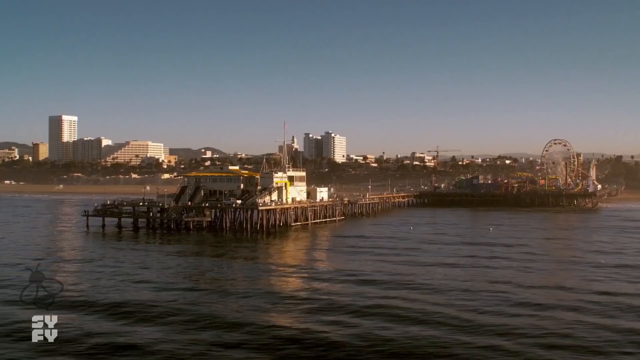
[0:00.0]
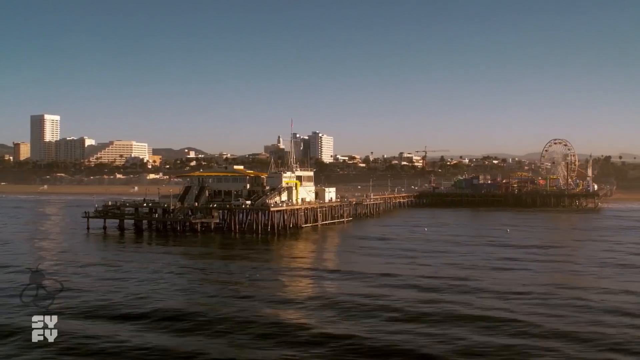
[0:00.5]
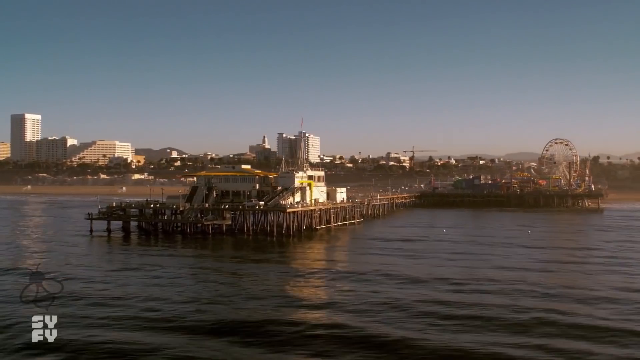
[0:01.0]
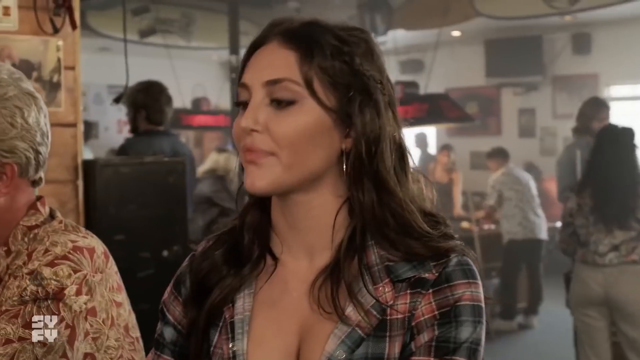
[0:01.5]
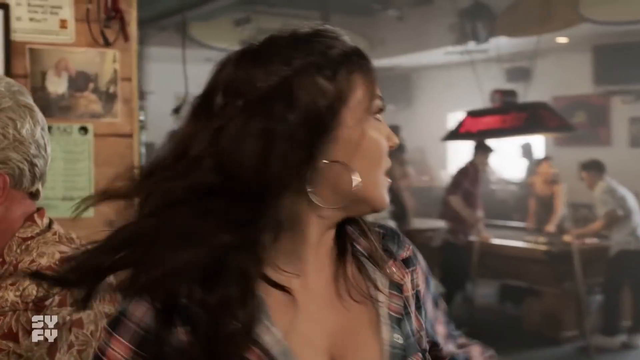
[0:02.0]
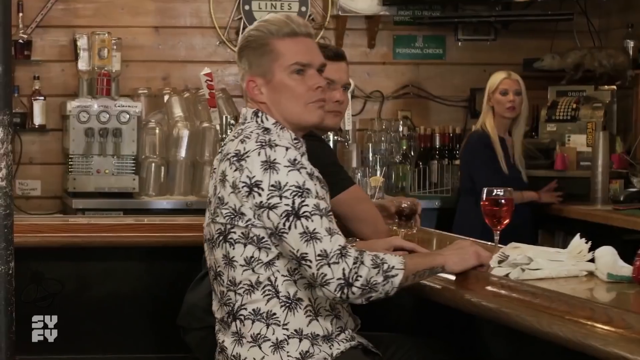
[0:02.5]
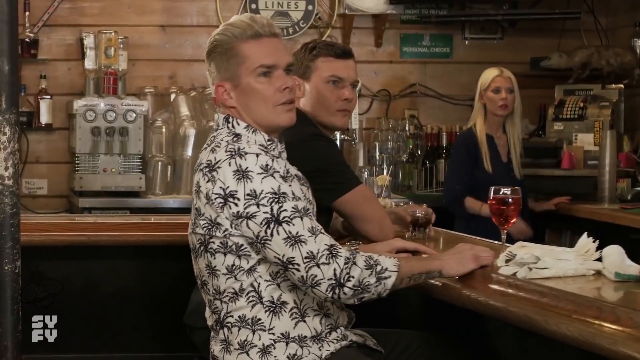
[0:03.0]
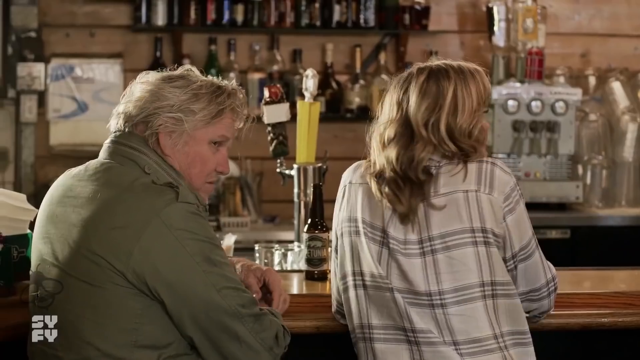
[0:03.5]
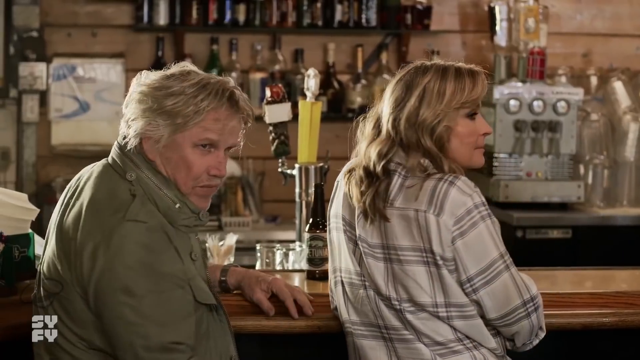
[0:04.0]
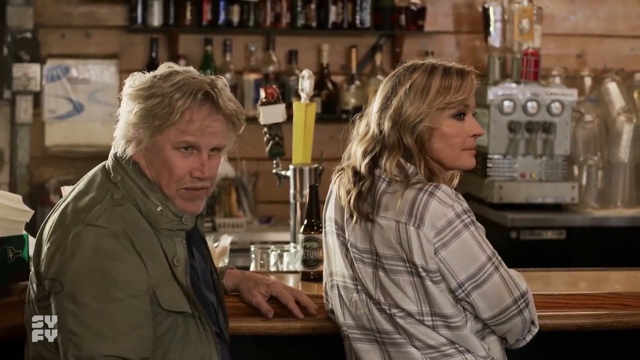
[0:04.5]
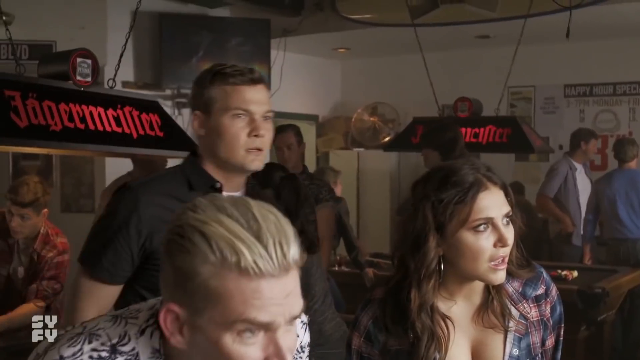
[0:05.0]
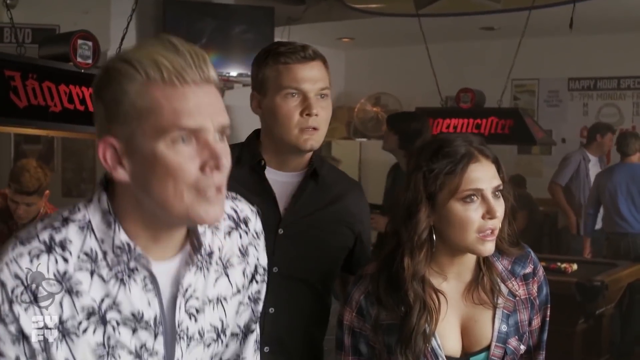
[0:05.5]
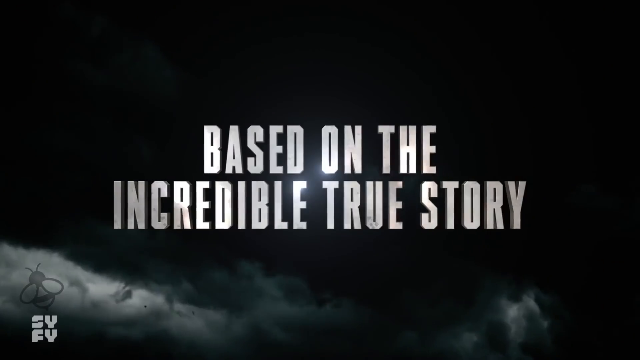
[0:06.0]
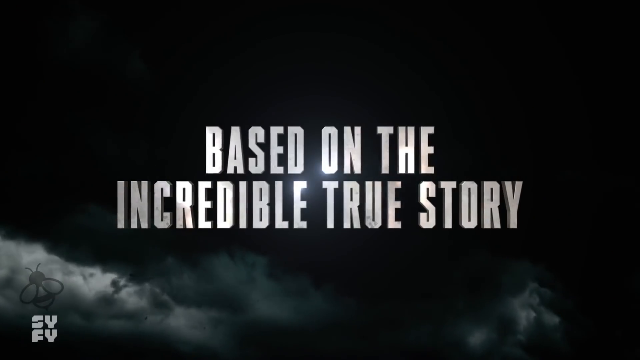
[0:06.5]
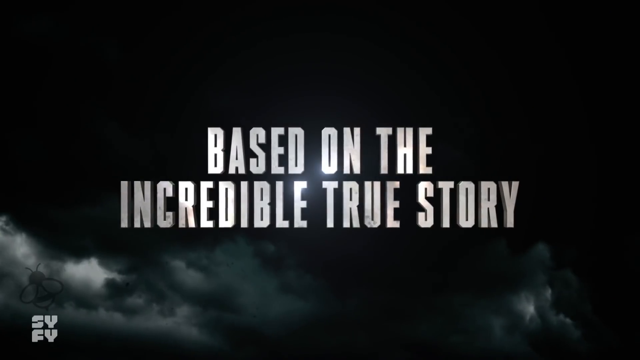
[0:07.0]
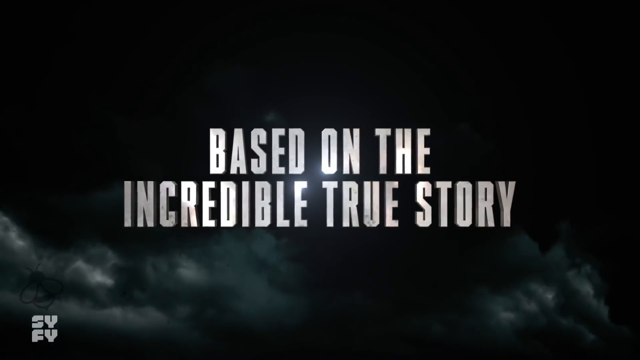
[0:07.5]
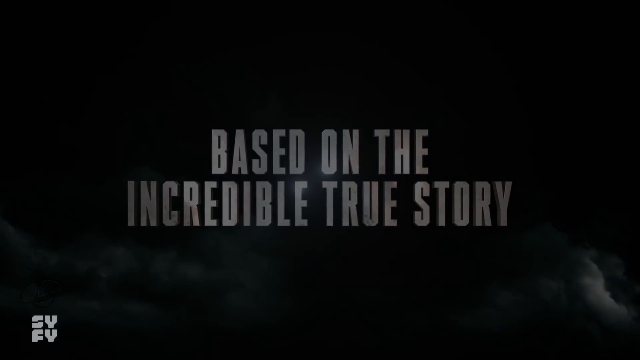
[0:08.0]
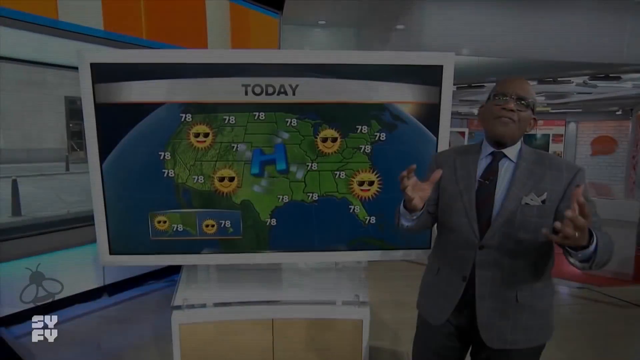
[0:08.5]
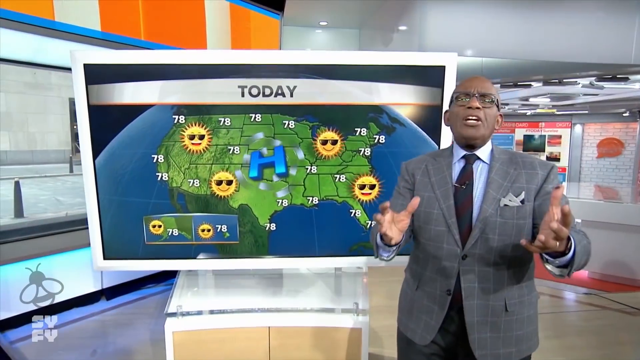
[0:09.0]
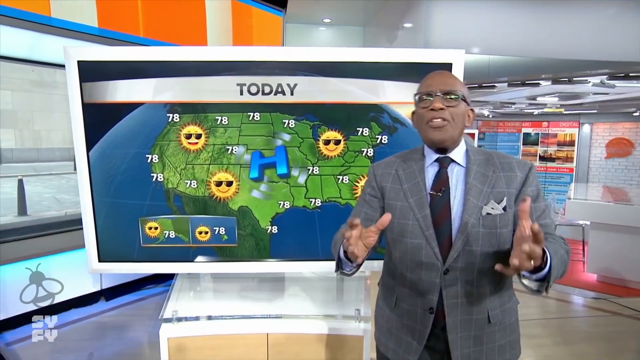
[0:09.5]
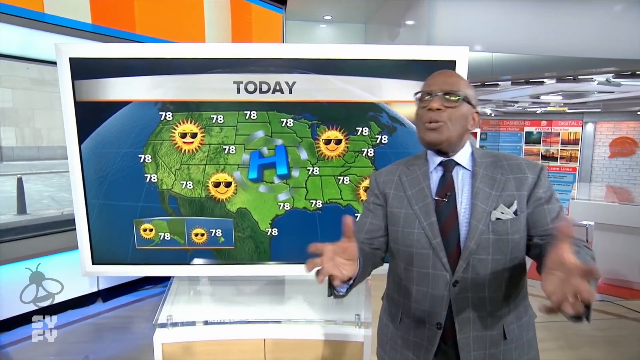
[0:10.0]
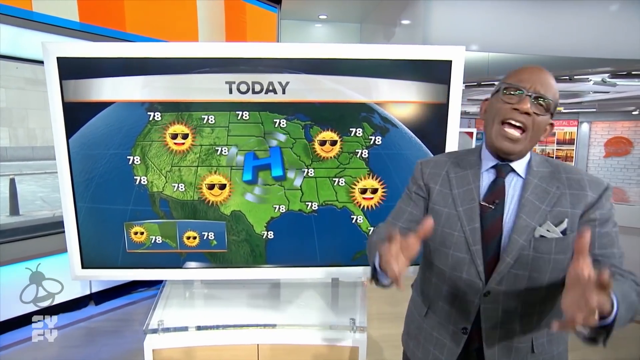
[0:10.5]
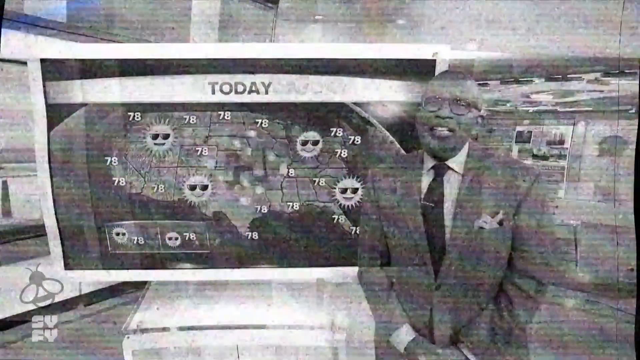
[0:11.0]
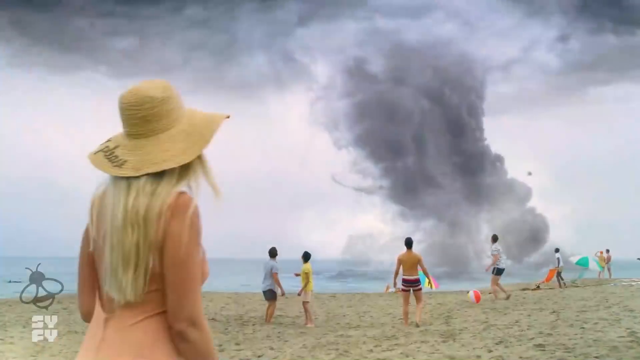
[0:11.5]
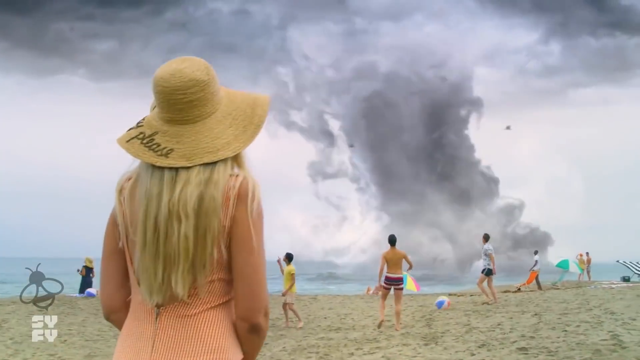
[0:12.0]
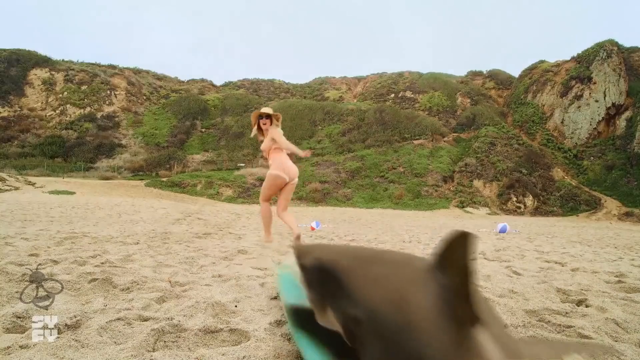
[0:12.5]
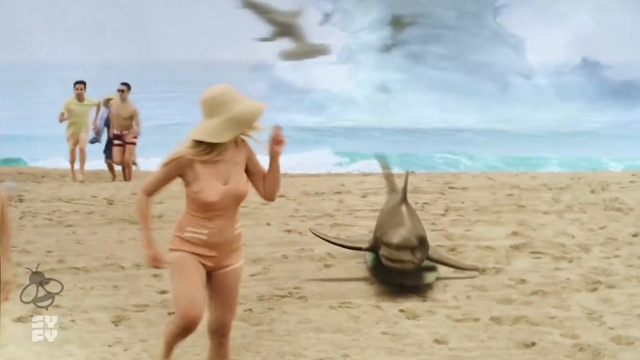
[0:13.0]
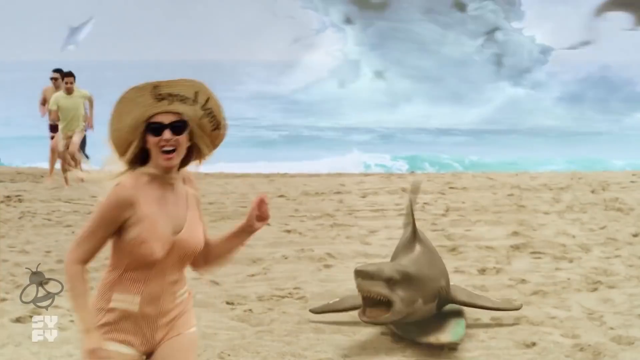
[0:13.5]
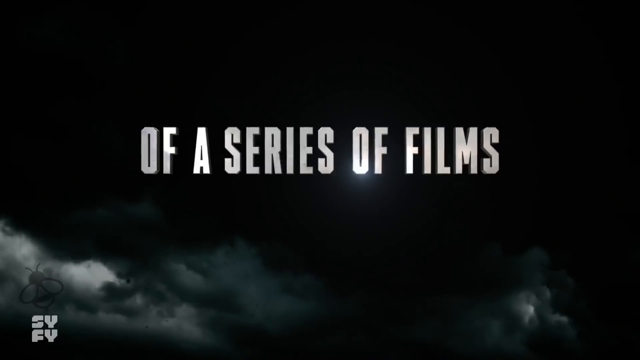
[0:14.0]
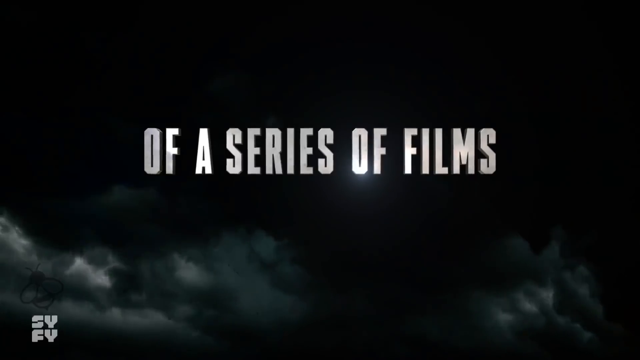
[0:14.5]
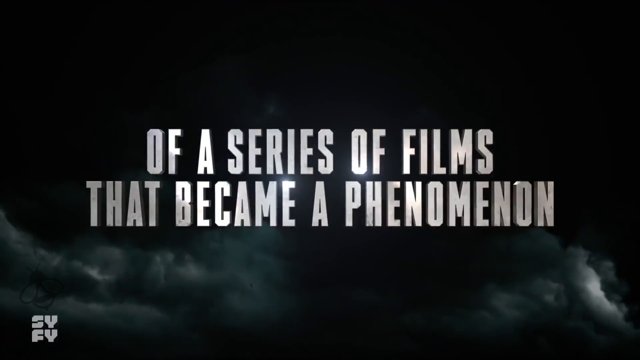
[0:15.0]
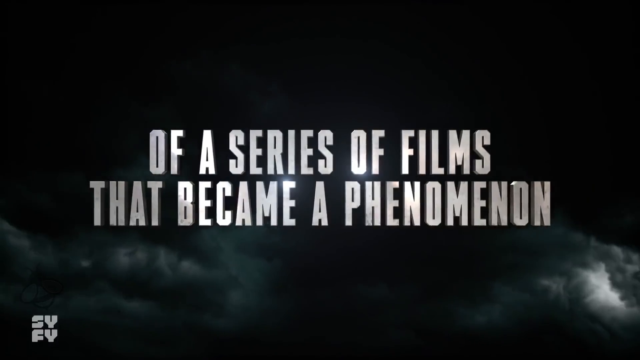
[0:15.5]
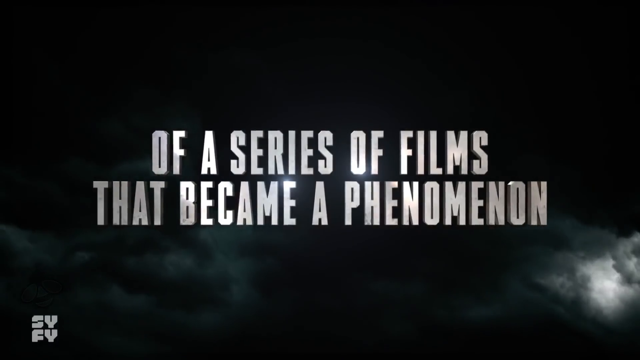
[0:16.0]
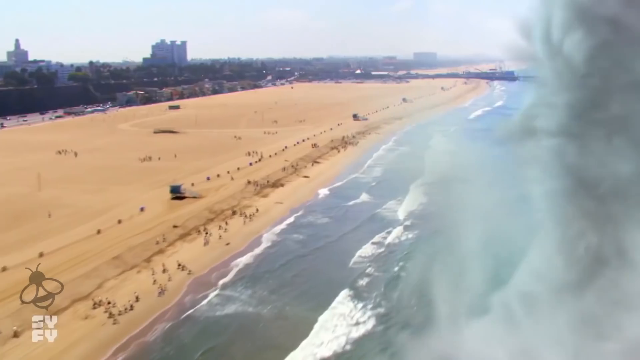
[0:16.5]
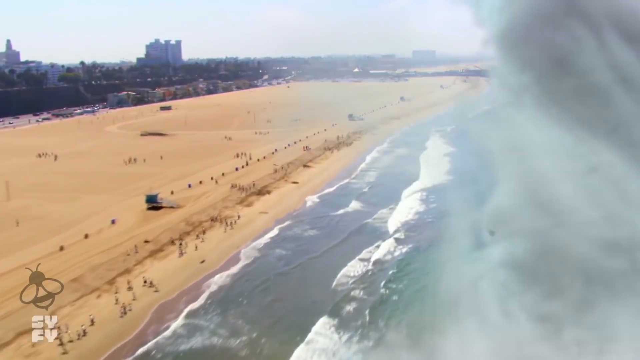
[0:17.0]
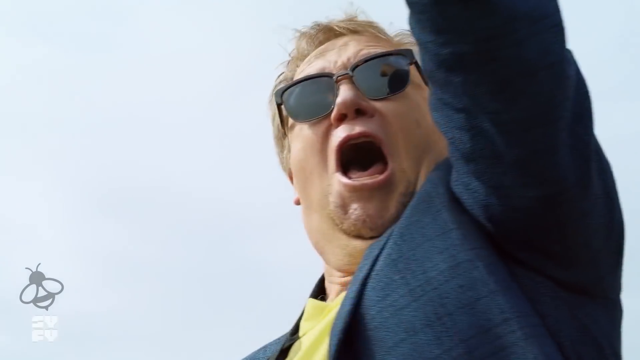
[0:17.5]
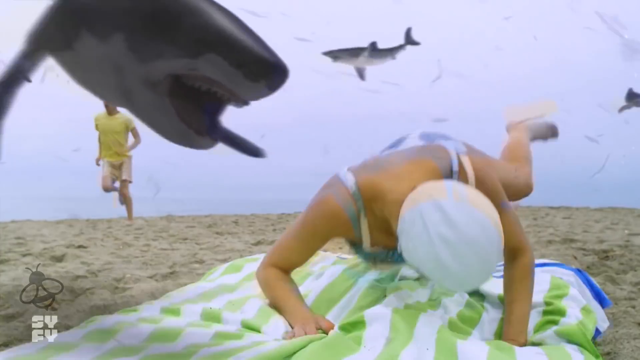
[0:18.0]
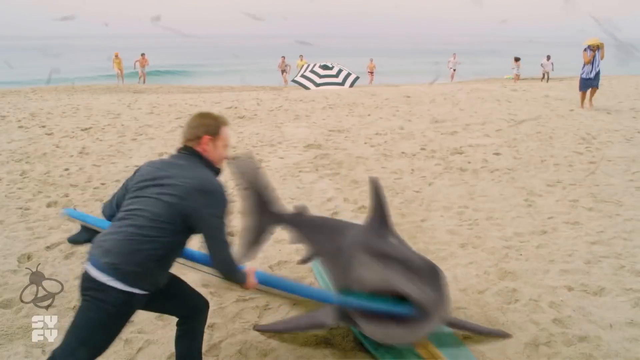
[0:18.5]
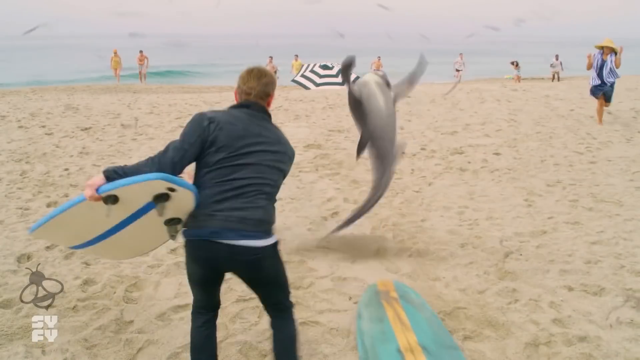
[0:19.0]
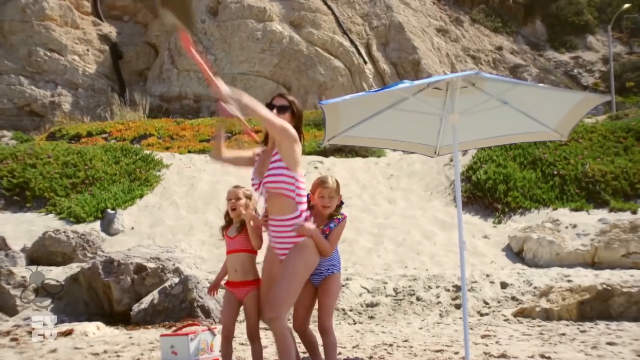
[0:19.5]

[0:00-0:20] A pier on a beach front appears, with many buildings in the back. The camera pans along the pier, and the scene changes to the inside of the bar or restaurant on the pier. A brunette girl turns around, and everybody stands up, shocked, looking outside. A screen reads "based on a true story." A news anchor, a weatherman, speaks into the camera, with the weather forecast behind him. The broadcast is interrupted, and the view returns to the beach, where a tornado is forming in the sea. Sharks appear, including a shark on a surfboard chasing a woman, and the screen reads "a series of films to become a phenomenon." The tornado lines the coast of the beach, and a man points toward it. Sharks fly everywhere, and one tries to bite a woman, who ducks for safety. A man takes a surfboard and jams it into a shark's mouth, and a woman defending her children catches a shark in her hands and throws it away.